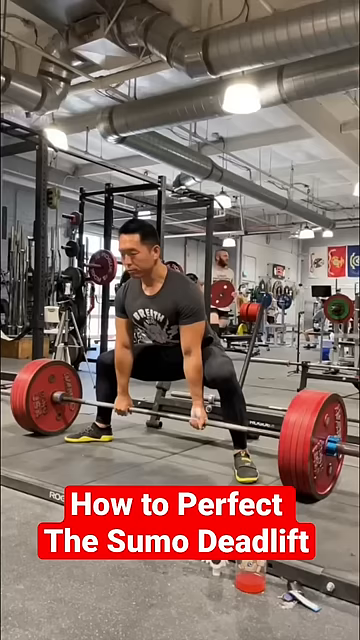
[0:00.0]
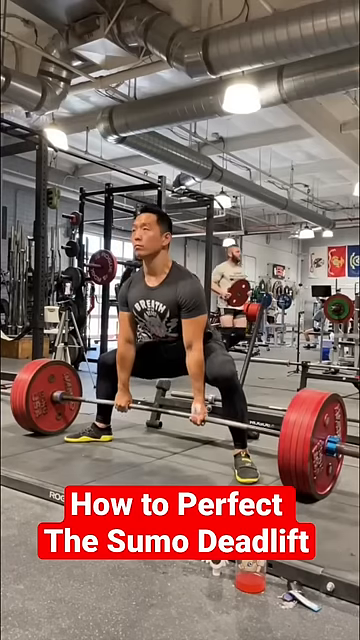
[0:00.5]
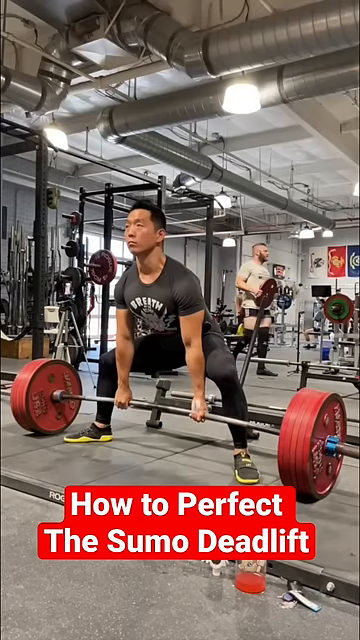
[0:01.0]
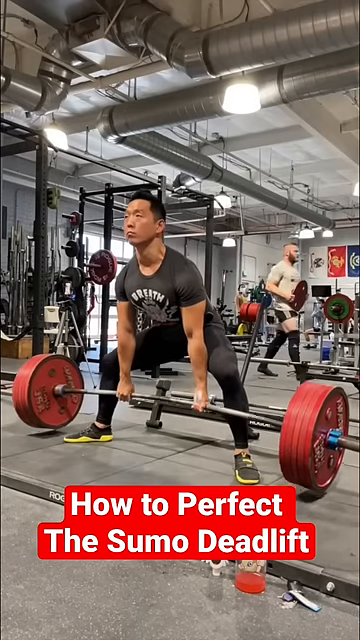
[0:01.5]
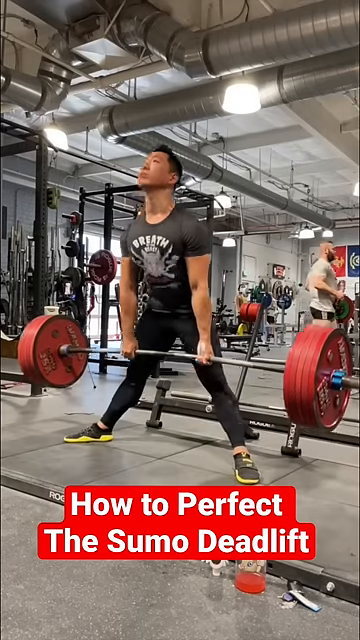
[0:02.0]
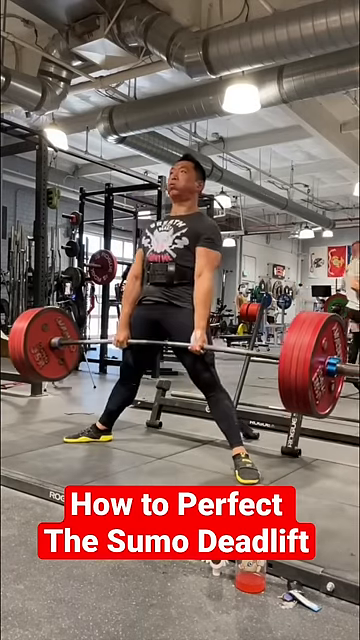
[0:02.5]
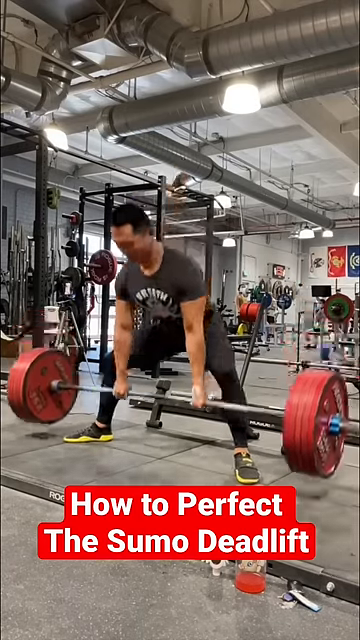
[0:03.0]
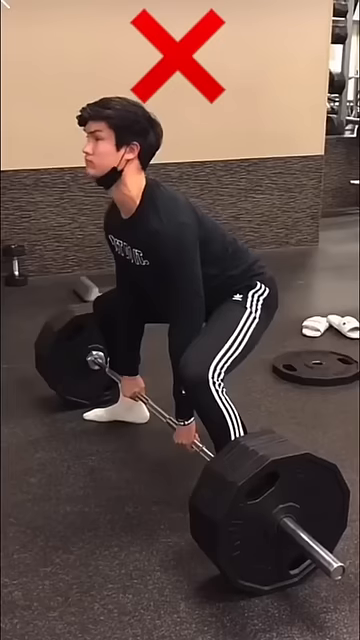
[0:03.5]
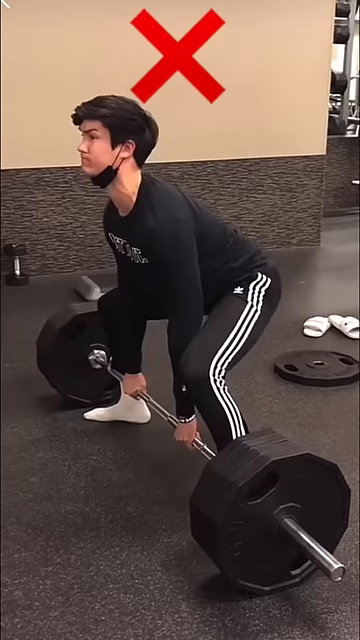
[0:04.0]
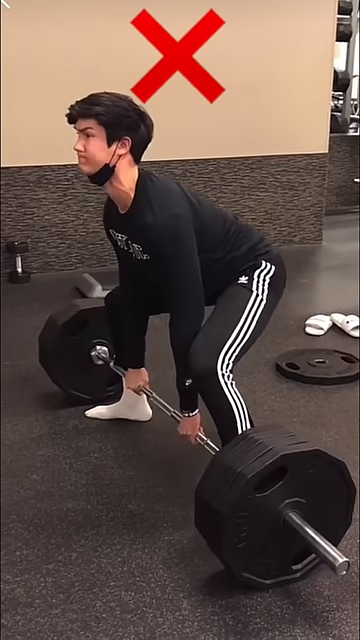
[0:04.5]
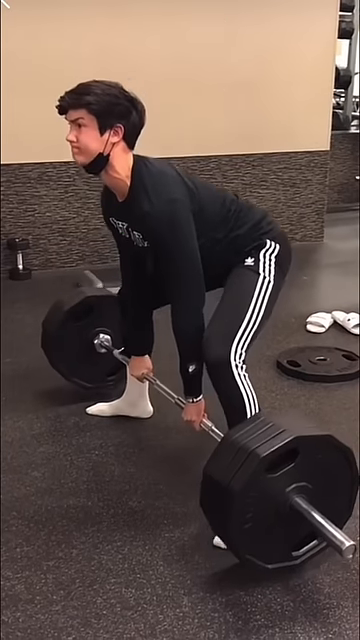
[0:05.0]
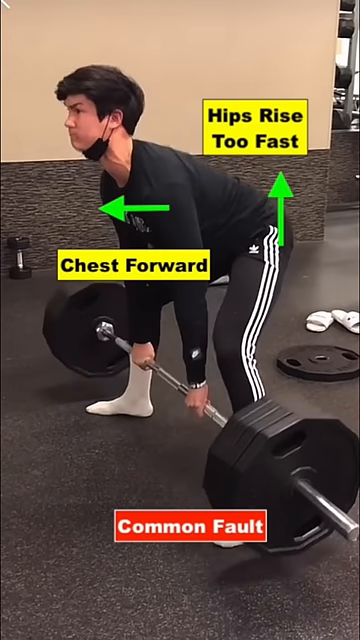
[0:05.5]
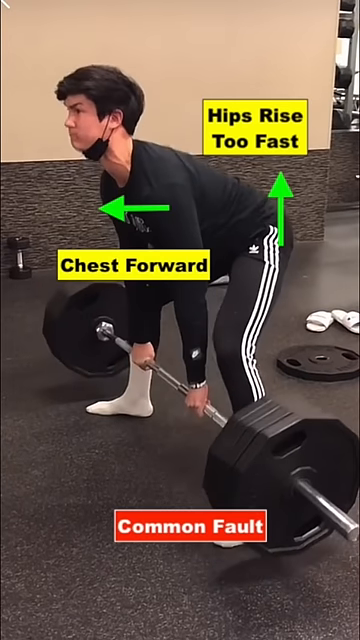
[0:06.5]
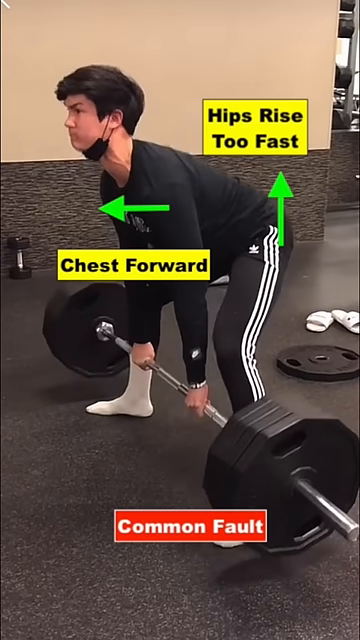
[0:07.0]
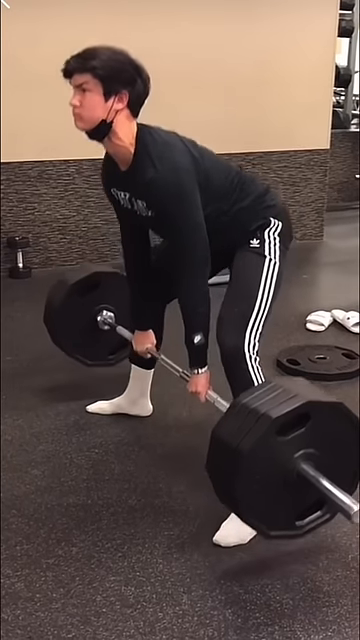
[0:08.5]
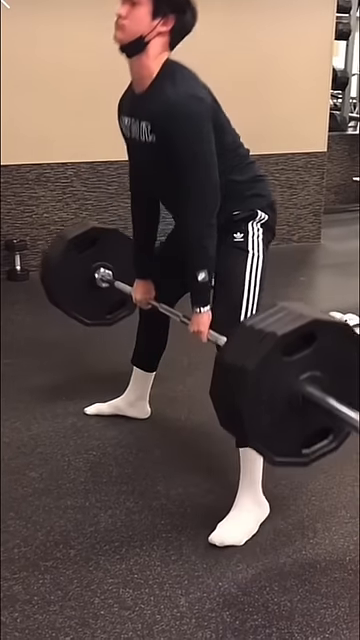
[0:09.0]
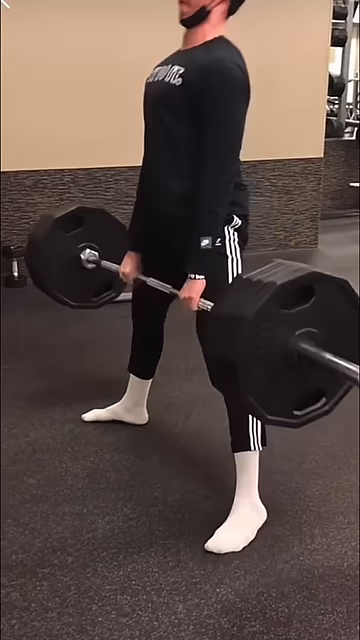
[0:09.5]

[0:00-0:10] A man performs deadlifts with a weightlifting bar, and a title at the bottom of the video reads "how to perfect the sumo deadlift." The video begins with an Asian man in a gym who appears to be lifting very low to the ground. There are deadlift weights, a lot of weights, and the weightlifting bar. A demonstration follows of a young man trying to do a deadlift, with a red X at the top because there is an error in his form. A diagram shows the young man attempting the lift; it looks like he is rising too fast, and his chest goes forward. The video shows the errors and the wrong way to do a deadlift: the young man lifts the weightlifting bar from the ground in the wrong position because of his form. The video shows the harm this can cause, then shows the right posture and form, including an X-ray of the young man doing a deadlift the right way instead of the wrong way.